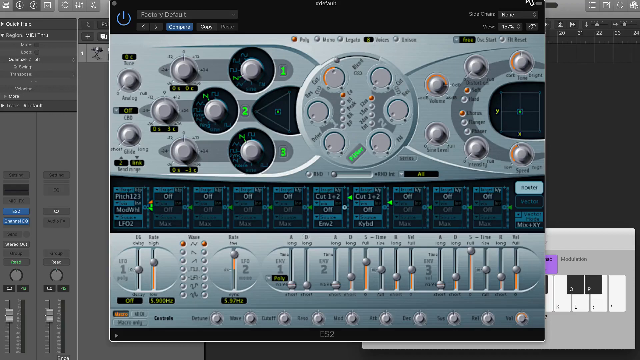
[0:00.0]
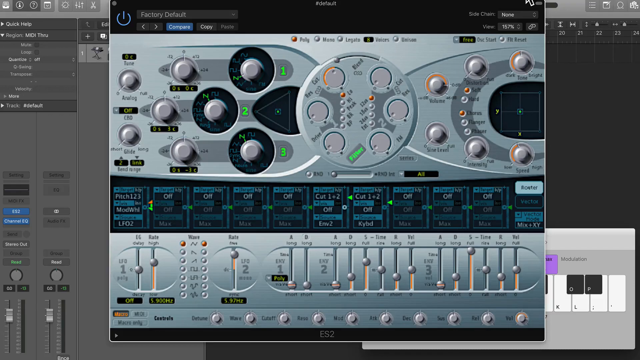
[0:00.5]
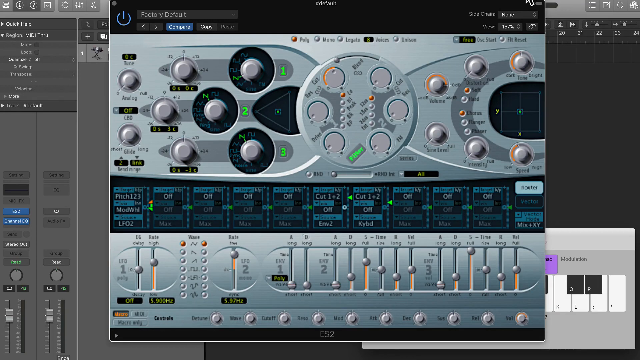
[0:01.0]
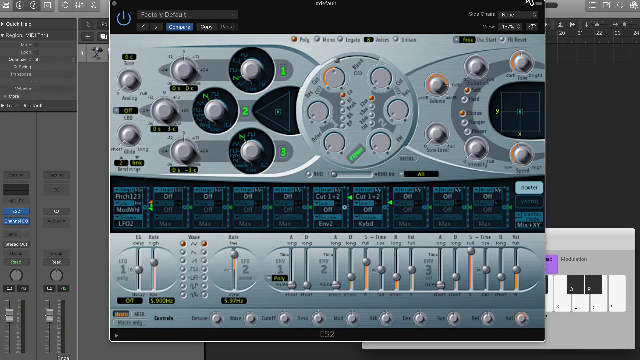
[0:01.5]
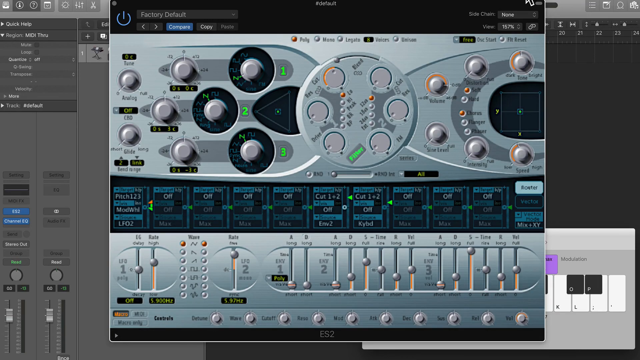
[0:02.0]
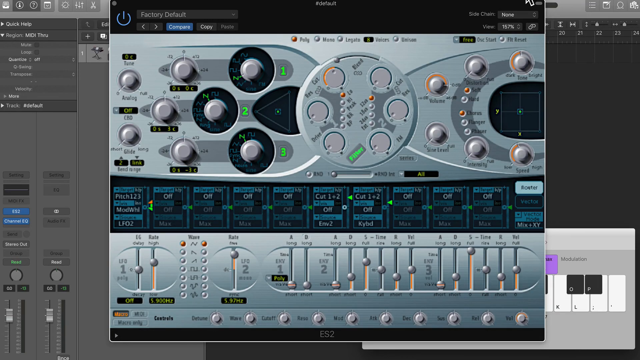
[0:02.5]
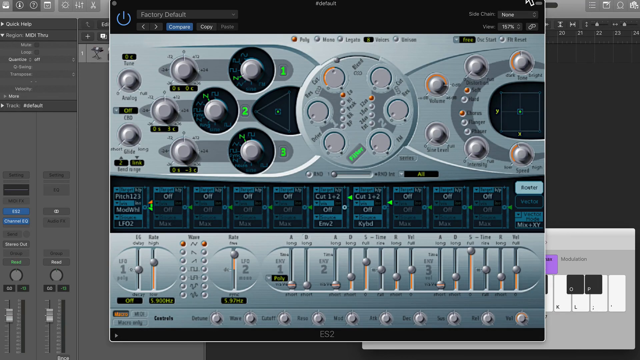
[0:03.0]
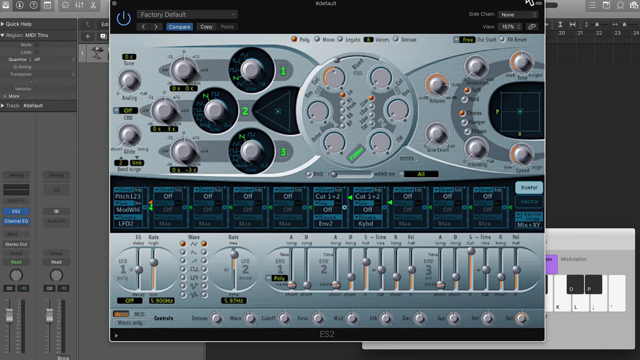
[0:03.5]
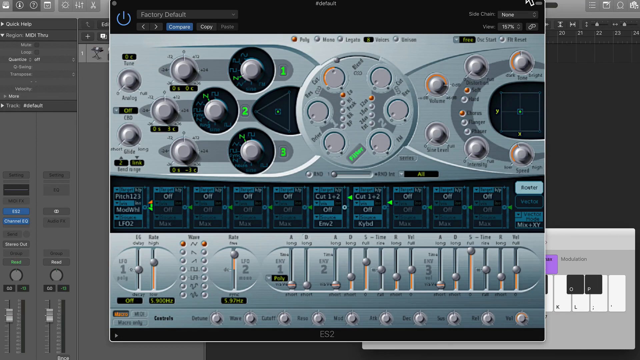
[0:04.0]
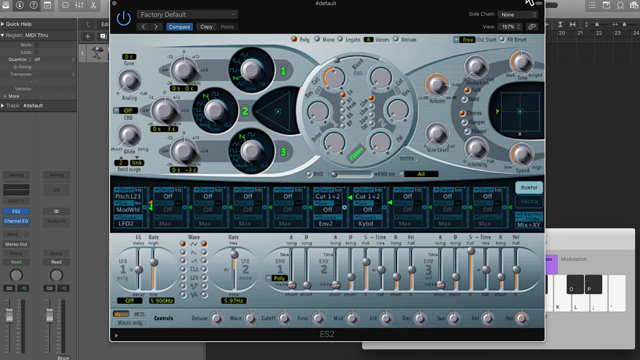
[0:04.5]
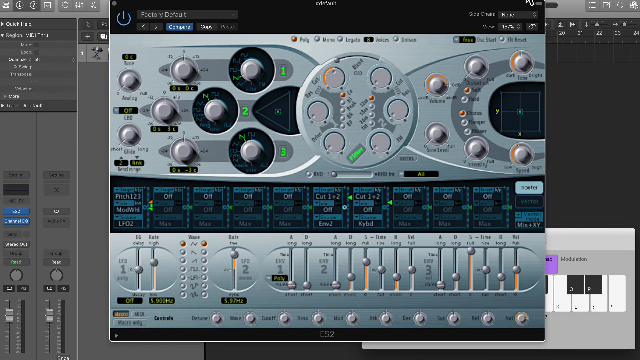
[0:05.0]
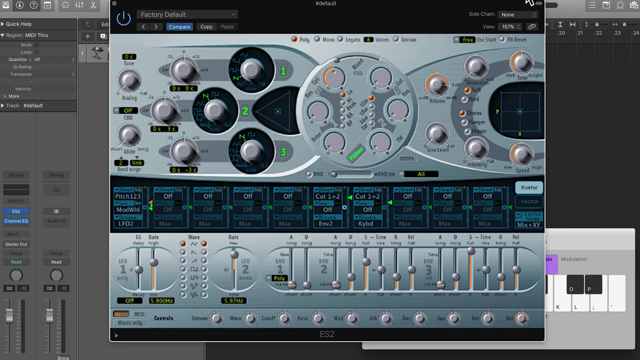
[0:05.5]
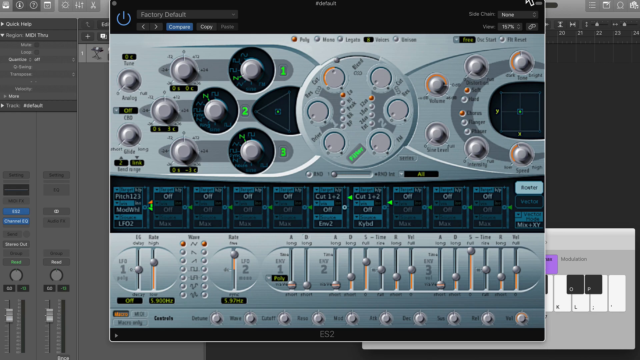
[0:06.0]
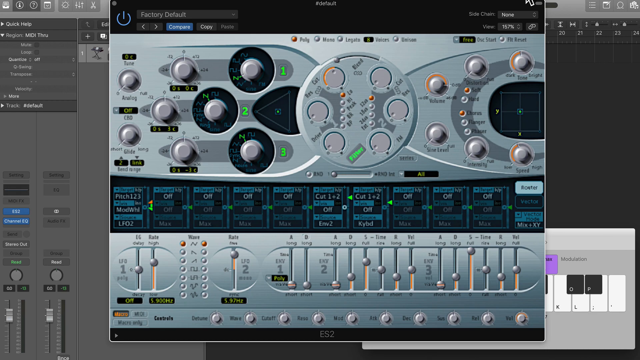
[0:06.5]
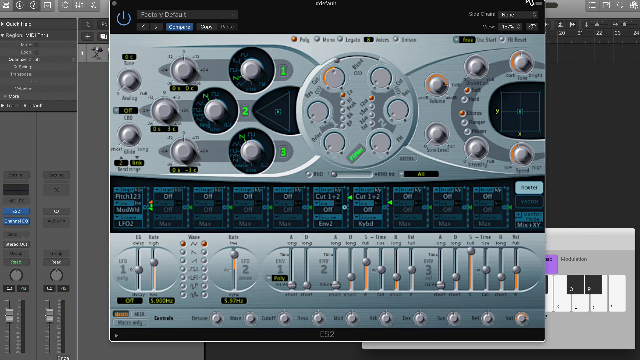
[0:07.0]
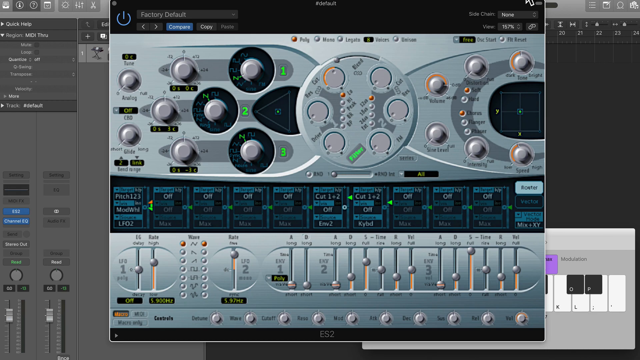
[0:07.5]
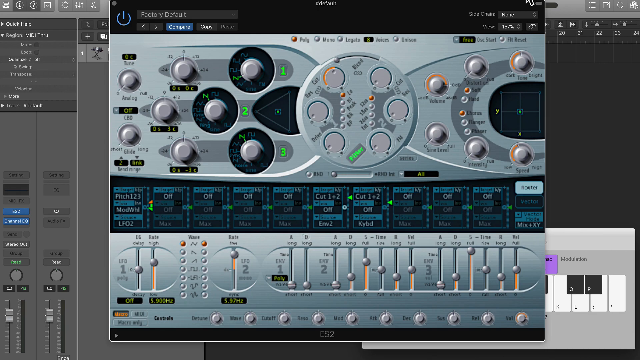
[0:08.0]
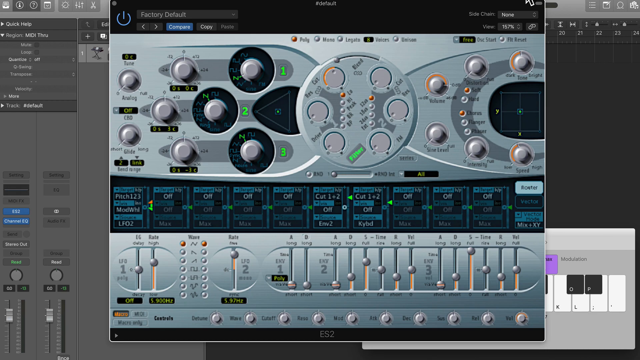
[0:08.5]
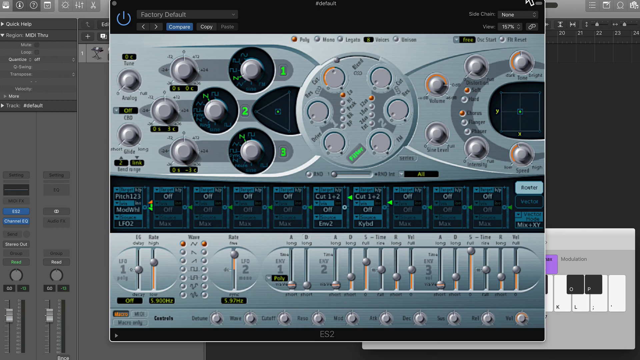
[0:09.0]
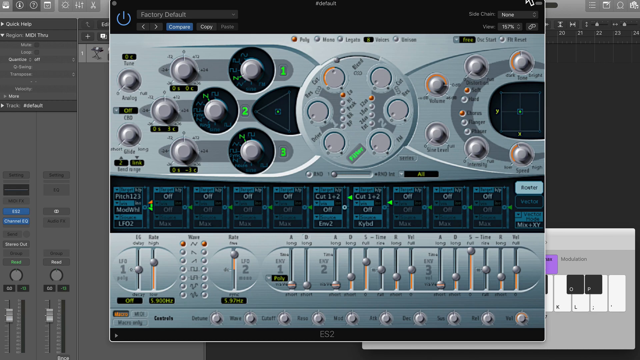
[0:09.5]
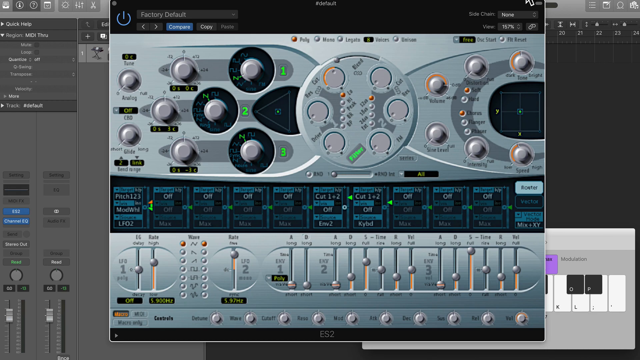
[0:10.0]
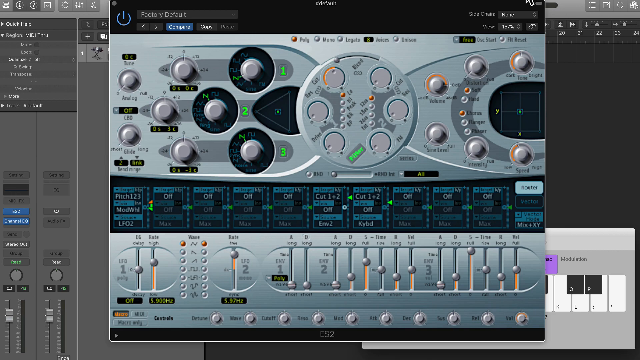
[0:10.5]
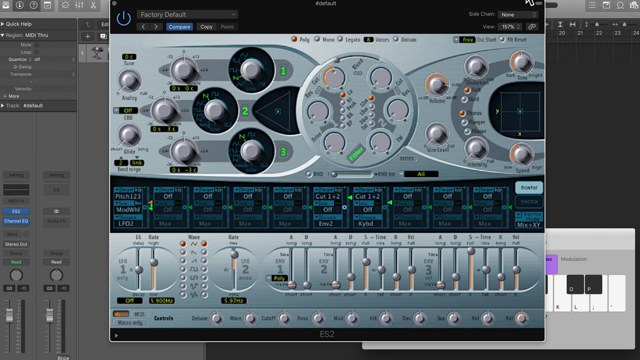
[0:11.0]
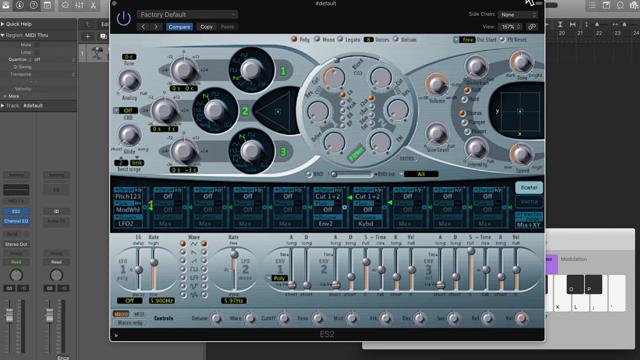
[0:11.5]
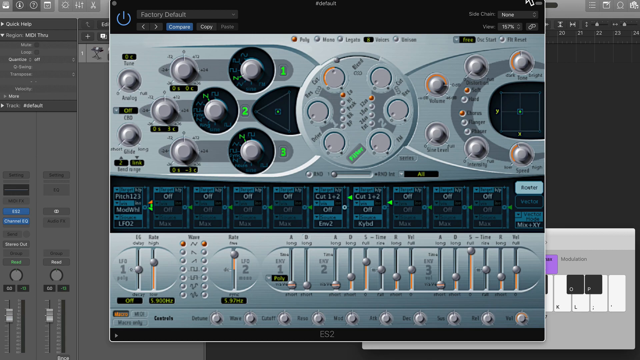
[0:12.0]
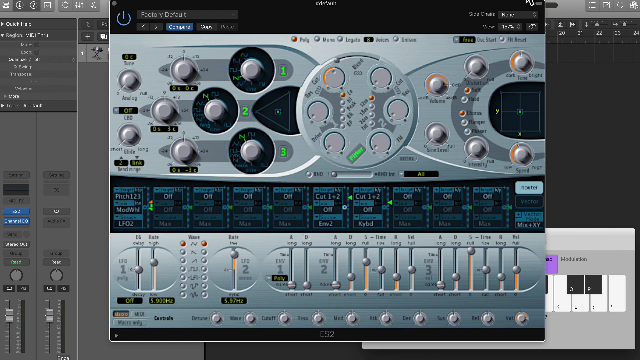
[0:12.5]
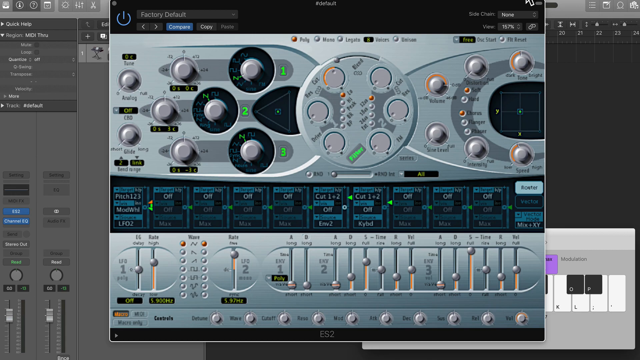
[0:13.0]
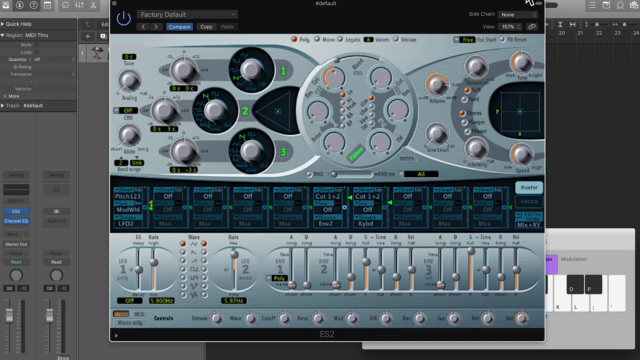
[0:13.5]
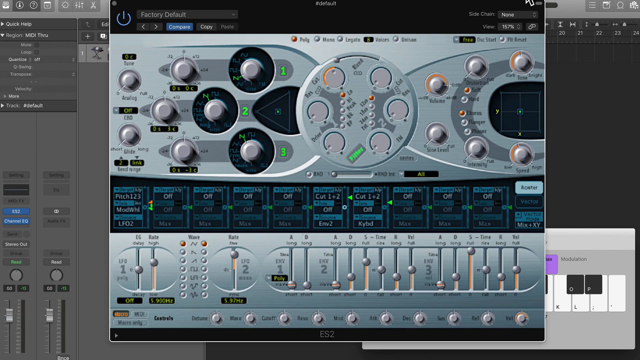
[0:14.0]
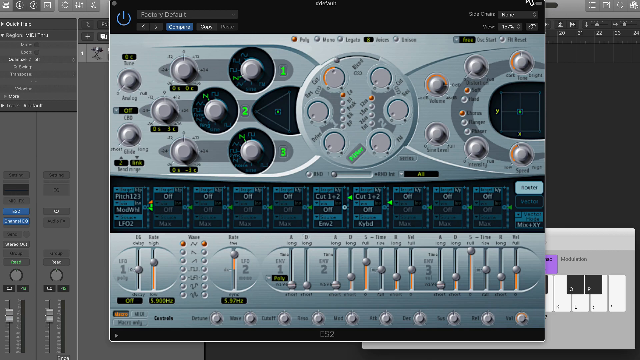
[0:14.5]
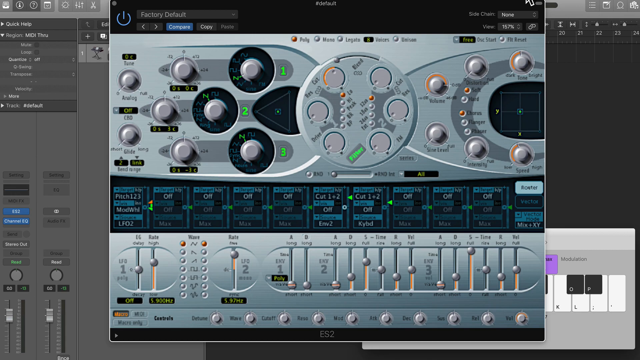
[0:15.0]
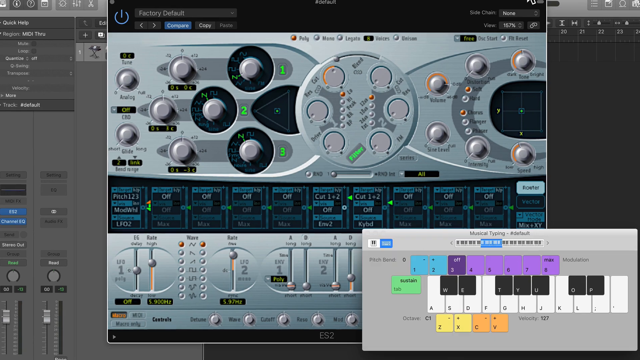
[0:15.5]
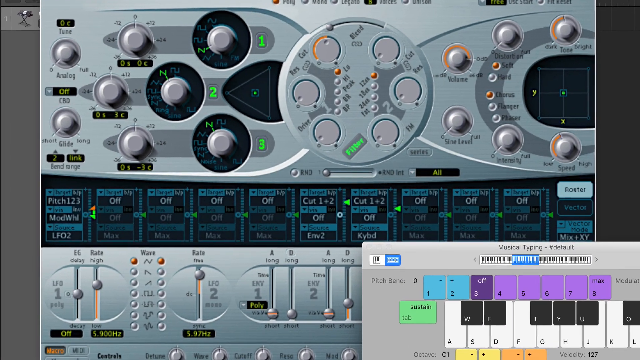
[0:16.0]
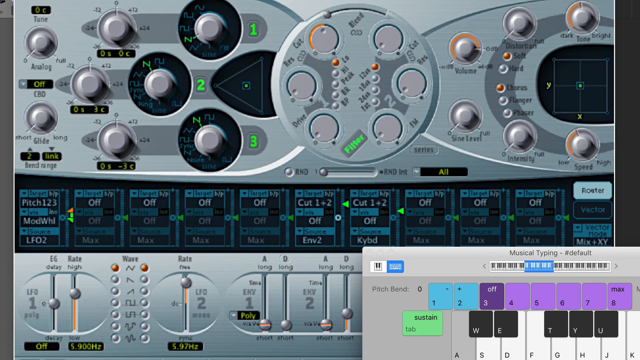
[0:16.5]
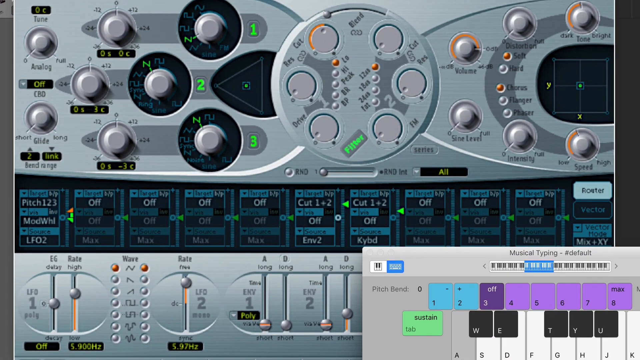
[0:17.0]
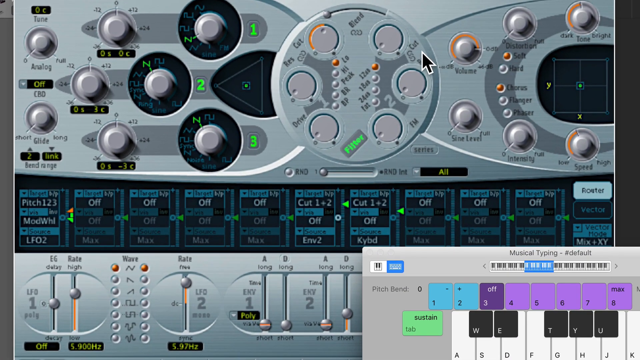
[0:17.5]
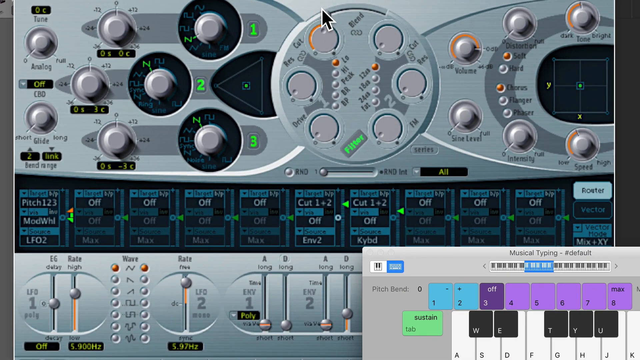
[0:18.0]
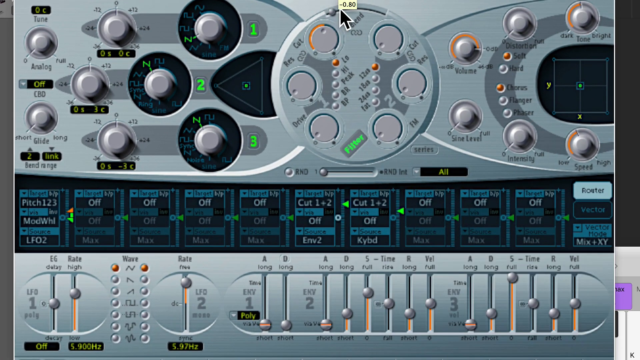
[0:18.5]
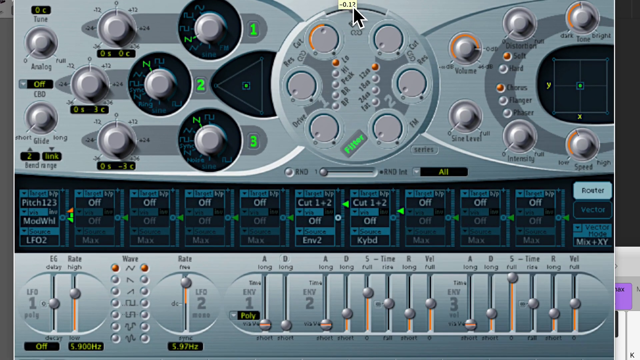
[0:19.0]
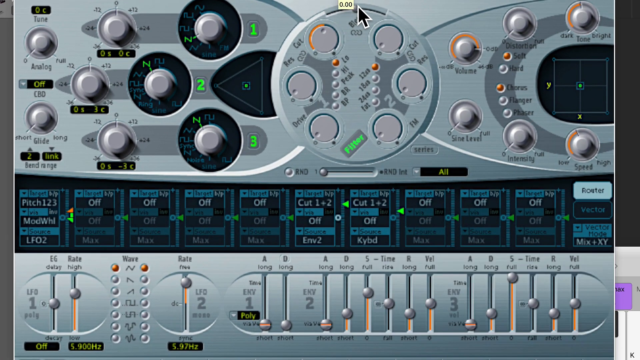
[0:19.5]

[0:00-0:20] The video appears to show a sound mix amp, or possibly a voice changer, or an equalizer for some type of physical sound or virtual audio device. The interface is silver and blue and features multiple knobs and bars to increase or decrease volume. In the bottom right is a panel titled "Musical Typing, #default", which appears to show several piano keys bound to different keys on the keyboard: W, E, T, Y, and U. The keys 1, 2, 3, 4, 5, 6, 7, and 8 are at the top of the panel. The video then zooms in to show the user changing a slider related to the input. The piano keys tied to keyboard keys are shown as virtual piano keys in the traditional white and black, while the keys bound to 1 through 8 are a pinkish purplish color.